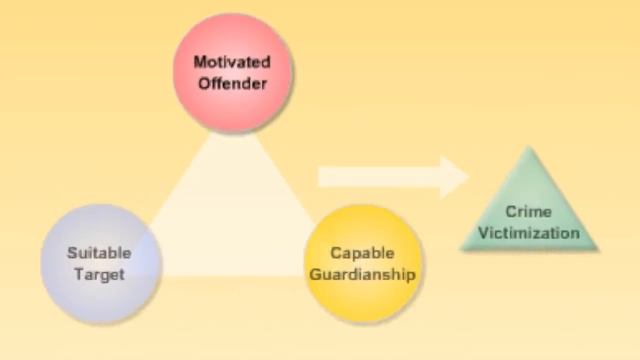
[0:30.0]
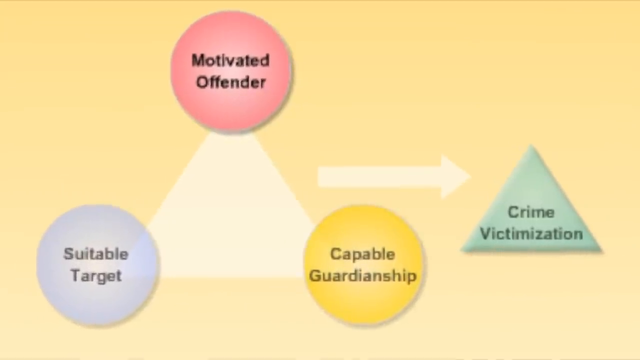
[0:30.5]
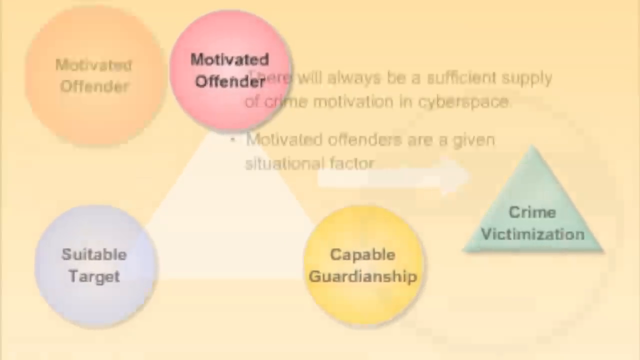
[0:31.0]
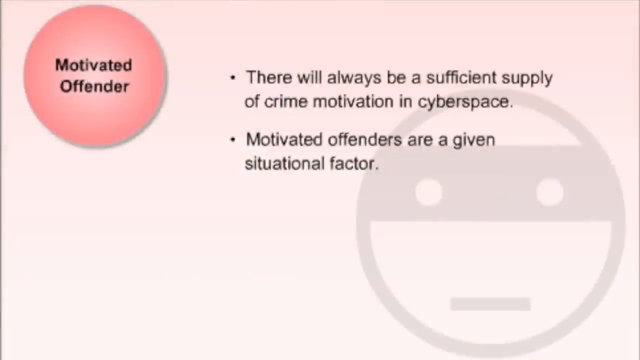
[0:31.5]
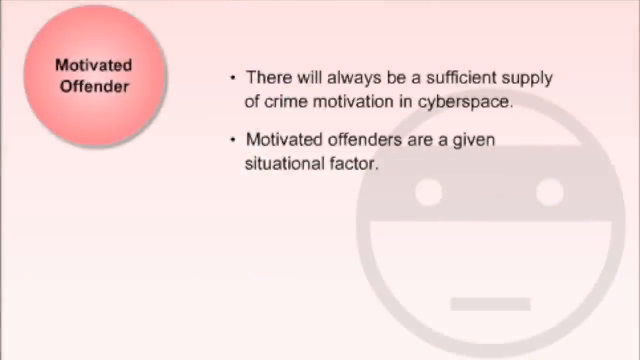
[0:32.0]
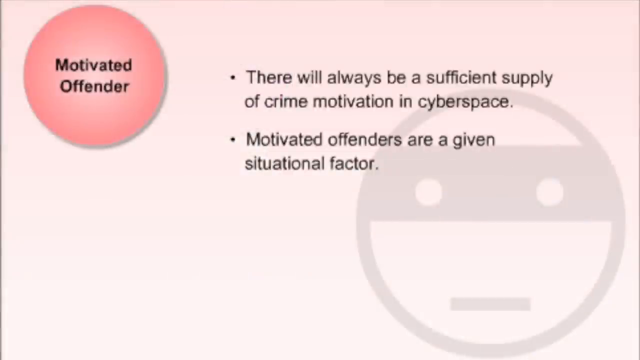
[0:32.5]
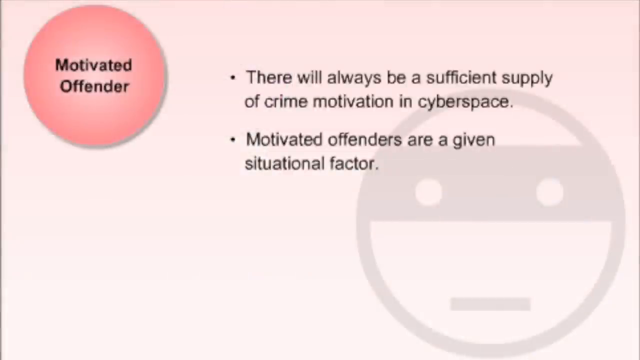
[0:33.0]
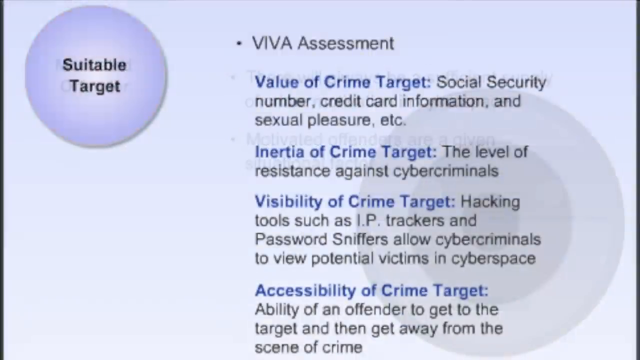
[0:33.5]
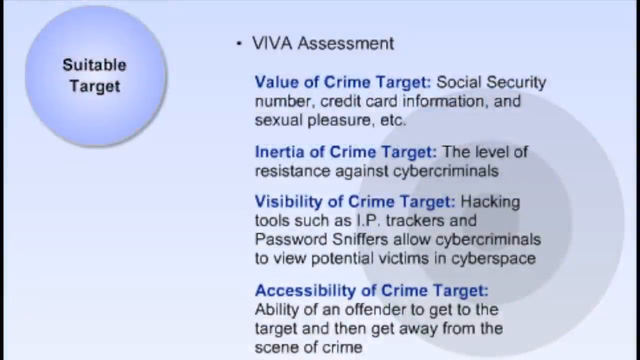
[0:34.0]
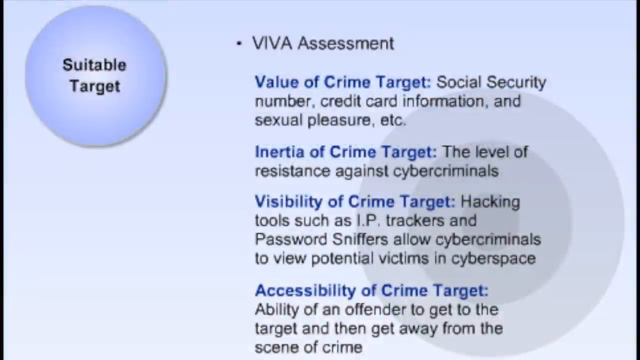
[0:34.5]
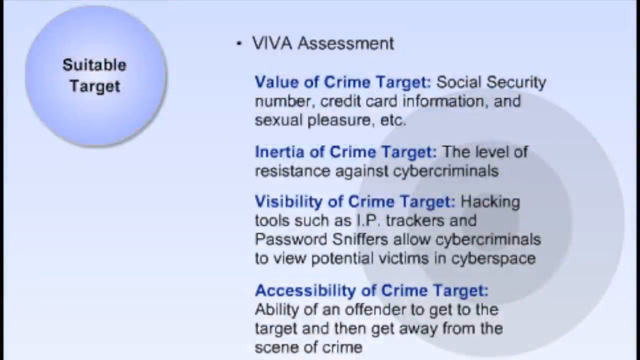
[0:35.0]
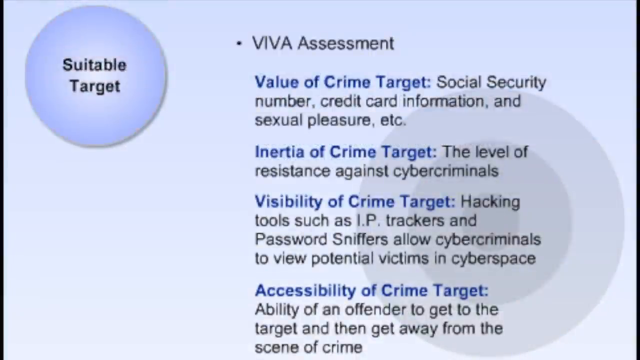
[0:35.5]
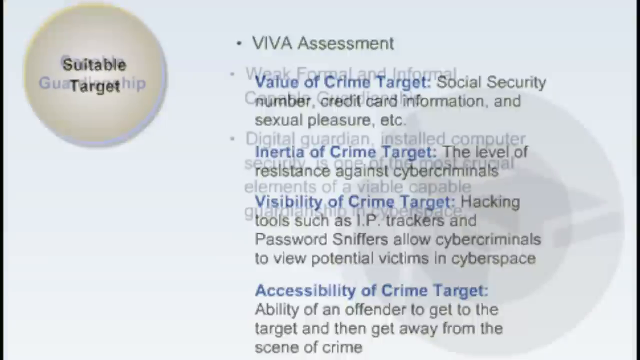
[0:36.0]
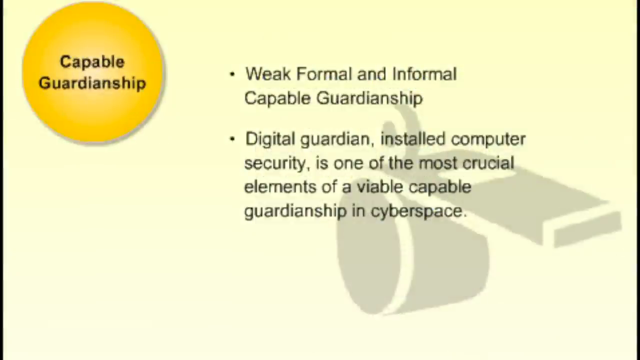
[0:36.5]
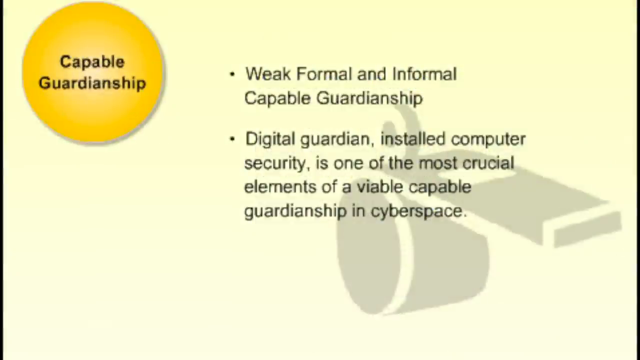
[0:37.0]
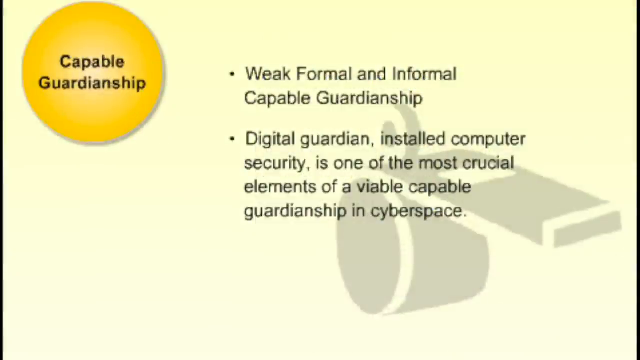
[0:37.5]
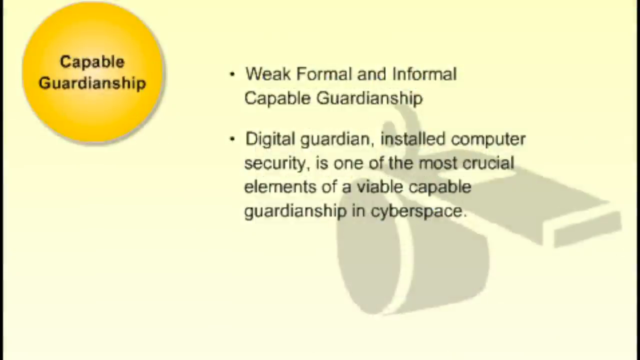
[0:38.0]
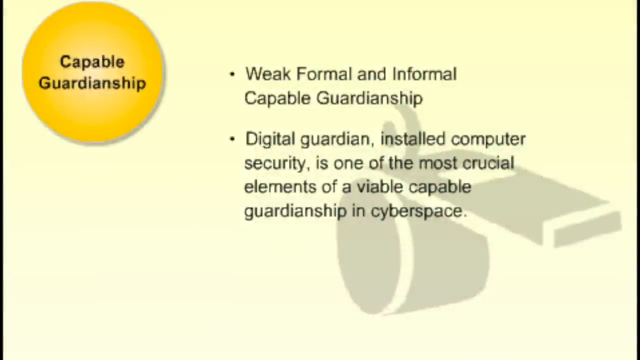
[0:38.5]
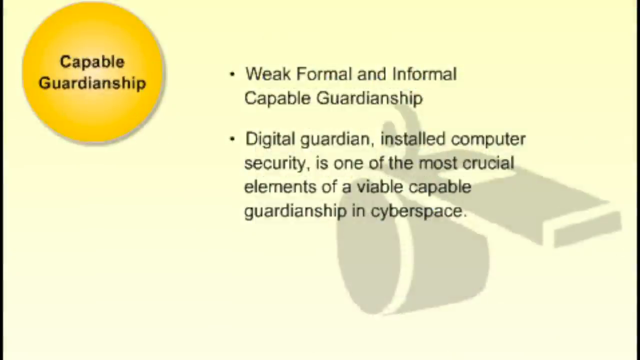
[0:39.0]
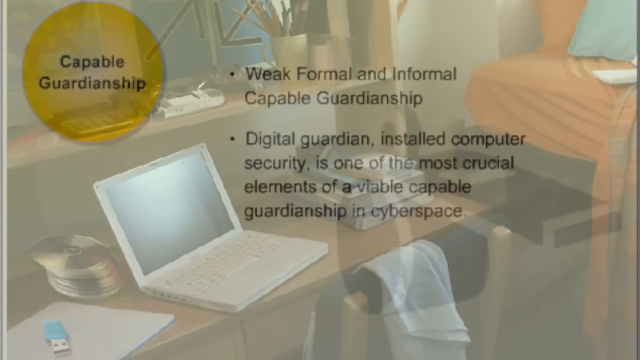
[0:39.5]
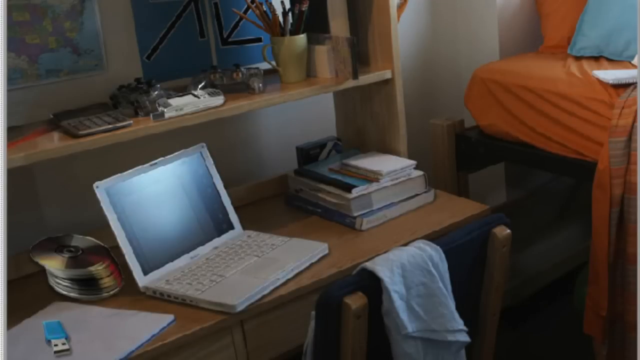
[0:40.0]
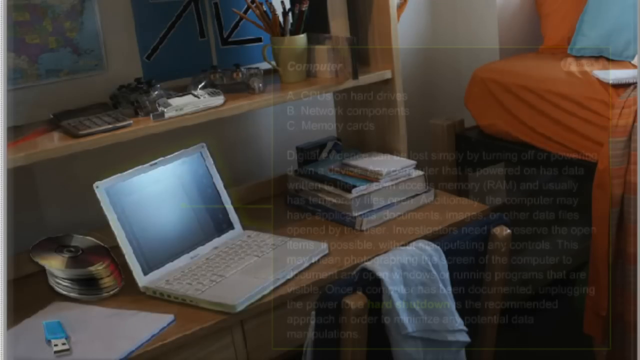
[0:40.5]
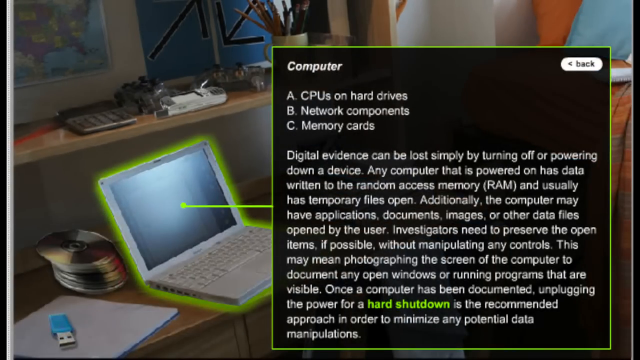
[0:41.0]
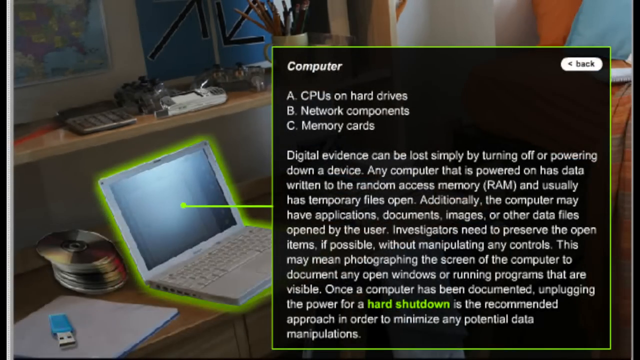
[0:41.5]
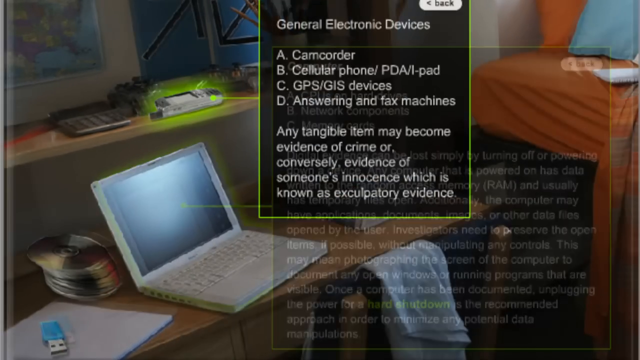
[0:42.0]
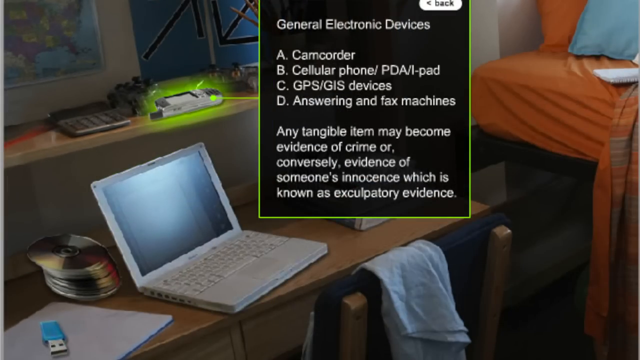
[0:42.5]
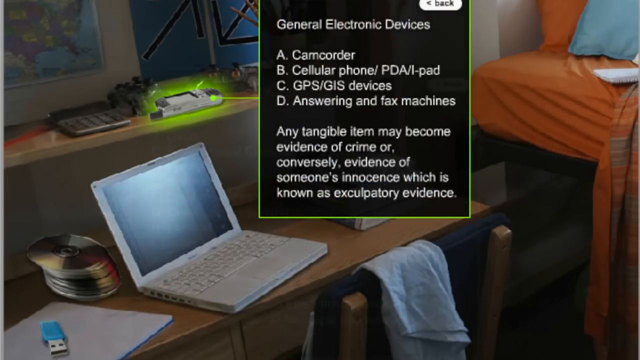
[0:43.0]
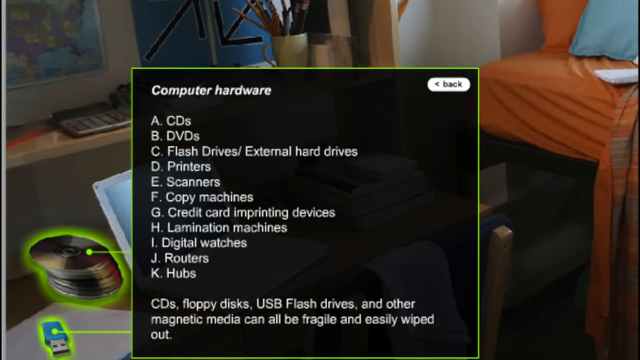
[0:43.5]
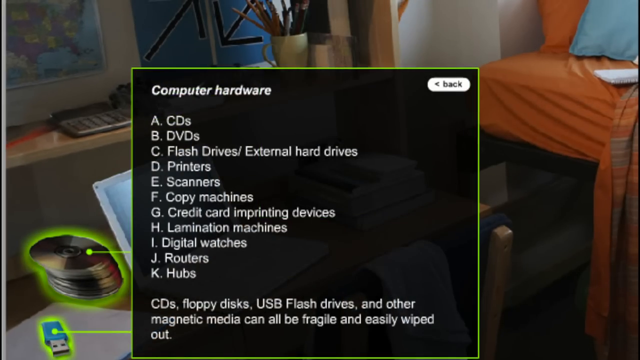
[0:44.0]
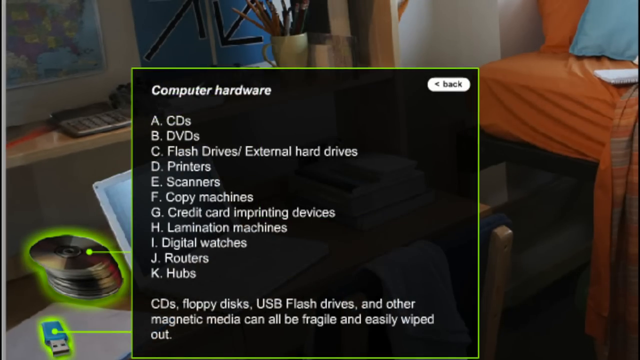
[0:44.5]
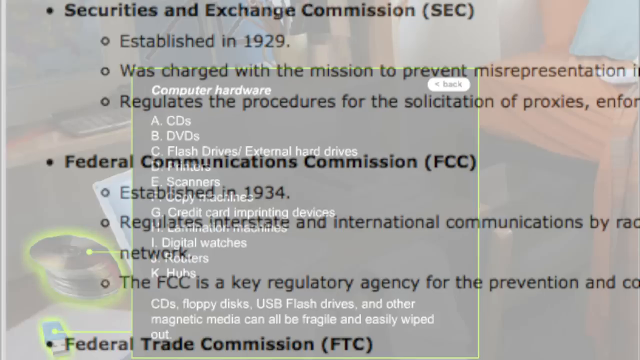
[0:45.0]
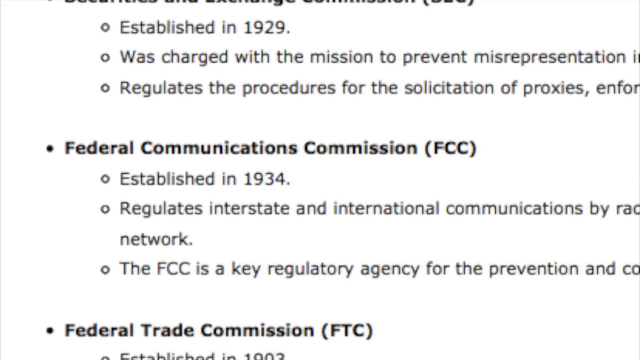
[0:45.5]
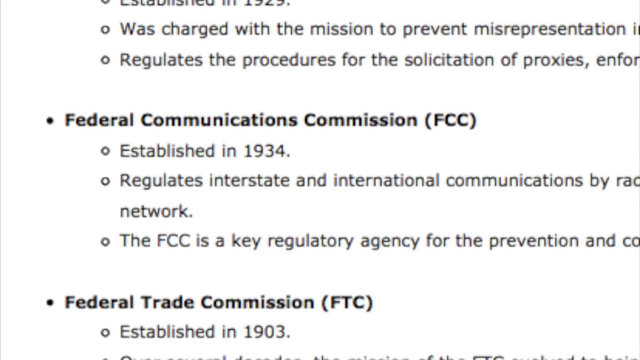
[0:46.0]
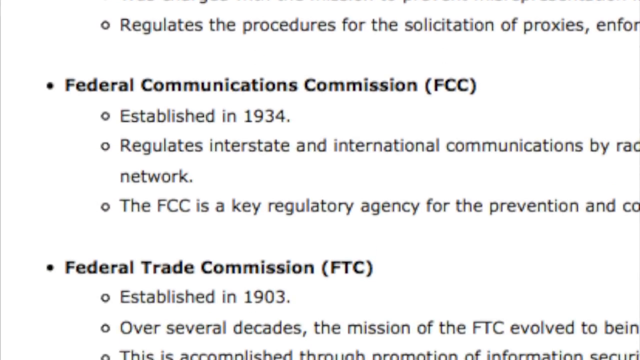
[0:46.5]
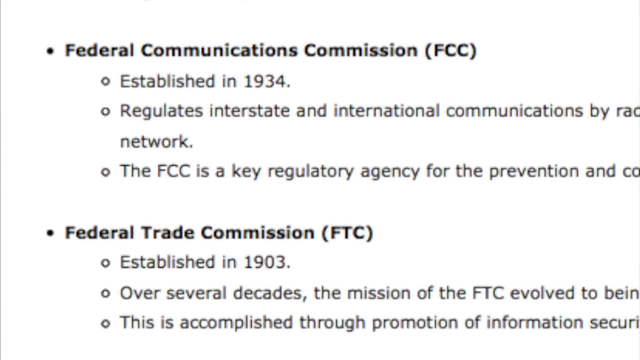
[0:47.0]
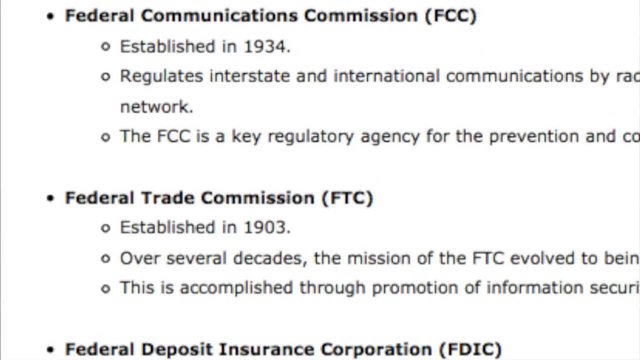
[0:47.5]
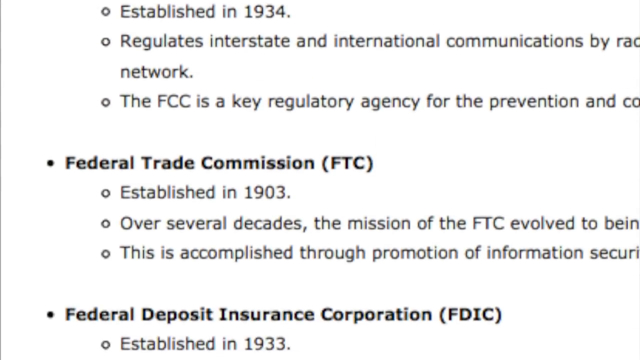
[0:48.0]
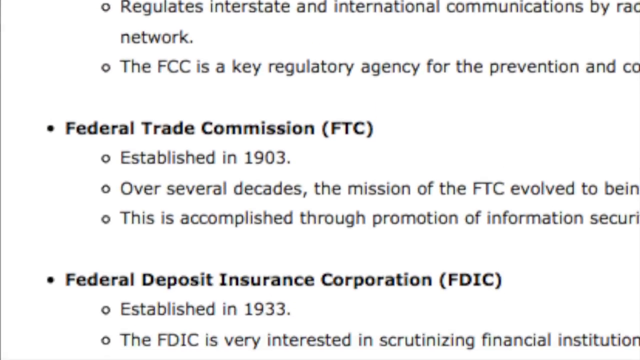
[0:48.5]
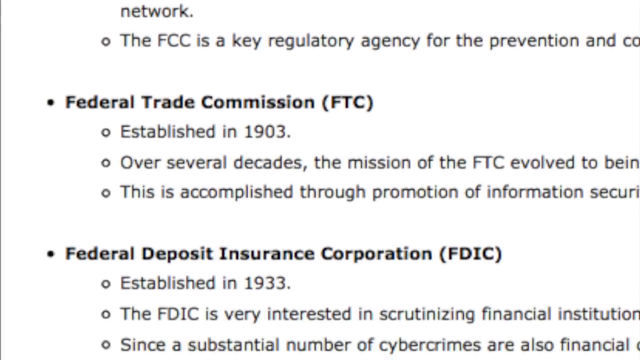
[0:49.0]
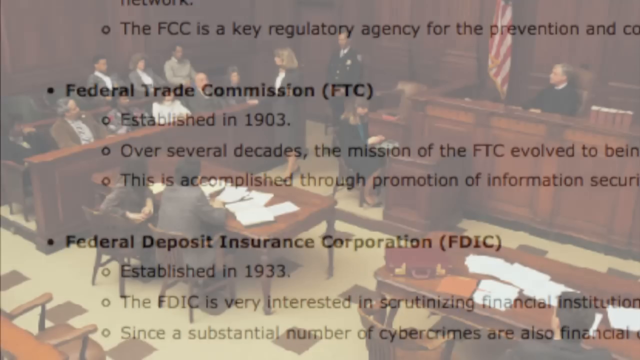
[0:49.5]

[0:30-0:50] On the yellow background are three circles, each a different color, placed at the corners of a triangle in the background. The top circle is pink and reads "motivated offender"; at the bottom left is "suitable target" in purple; and the other corner has text beginning "capable" in yellow. An arrow stretches from the triangle to a smaller green triangle on the right, which has the black words "crime victimization". The next page explains the motivated offender, shown at the top corner, with the pink circle in the center and text written going downwards. Above the text in the right corner, a diagram is being drawn: a circle with two eyes, representing a human face. On a second page, the suitable target is also explained.